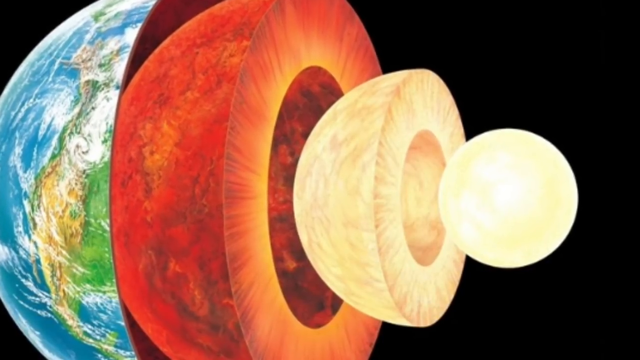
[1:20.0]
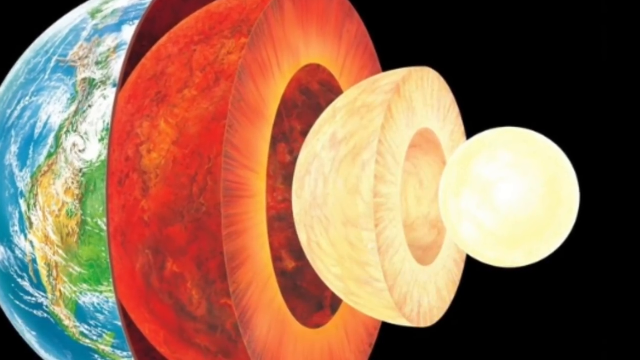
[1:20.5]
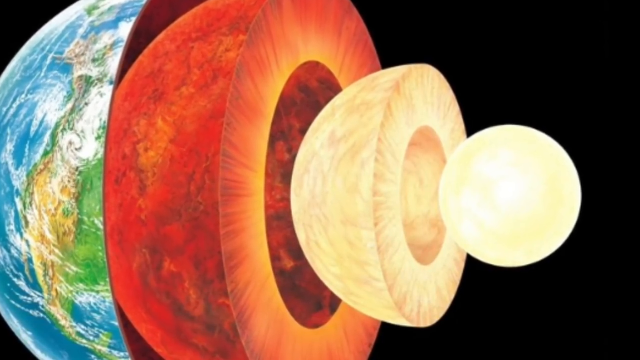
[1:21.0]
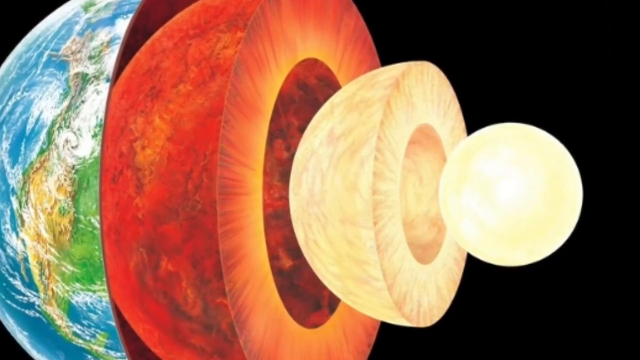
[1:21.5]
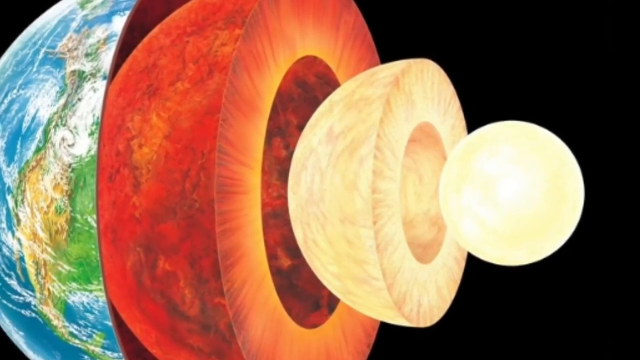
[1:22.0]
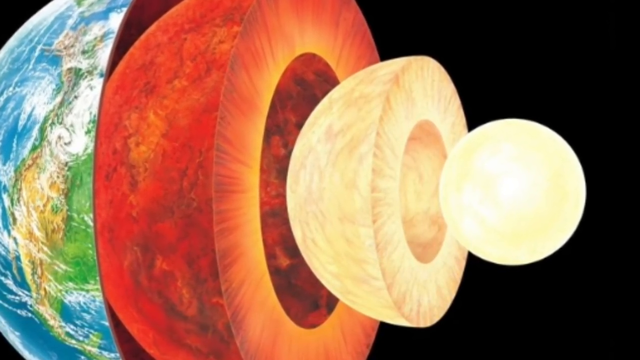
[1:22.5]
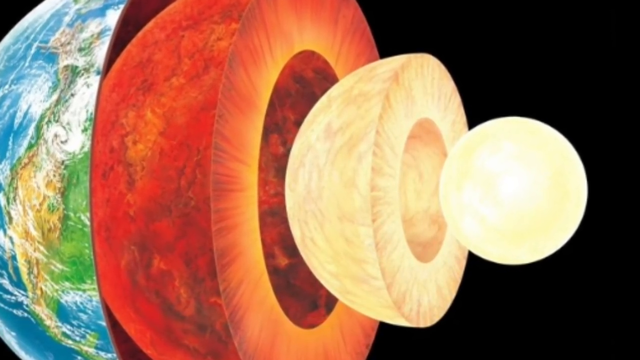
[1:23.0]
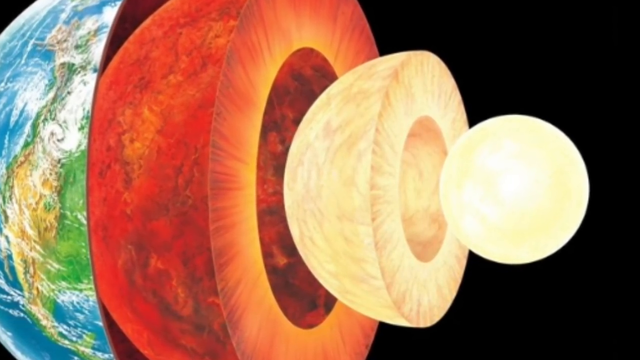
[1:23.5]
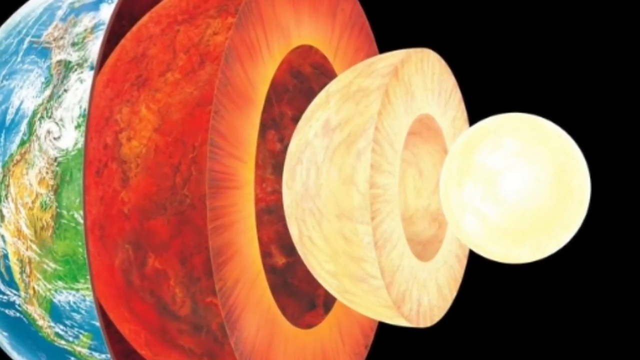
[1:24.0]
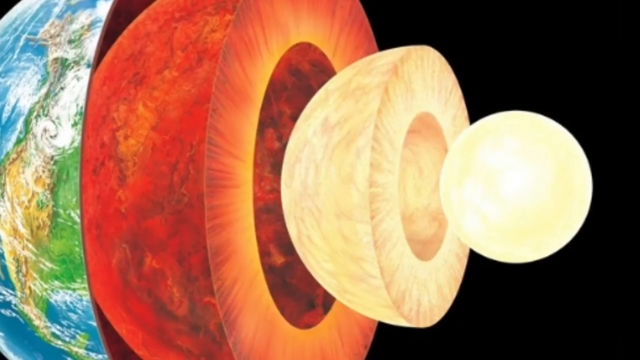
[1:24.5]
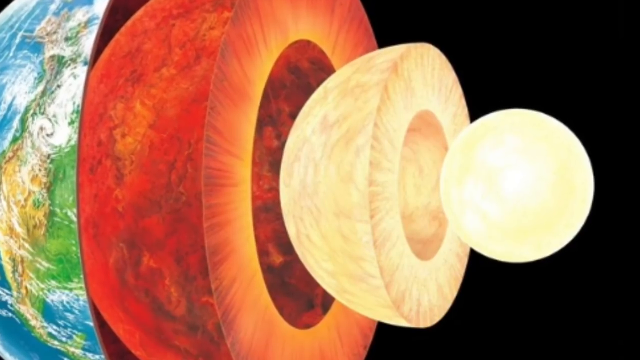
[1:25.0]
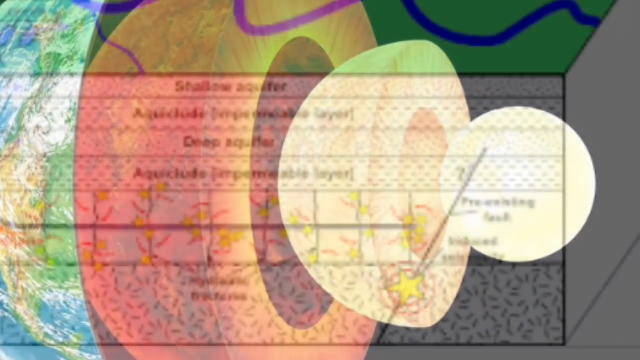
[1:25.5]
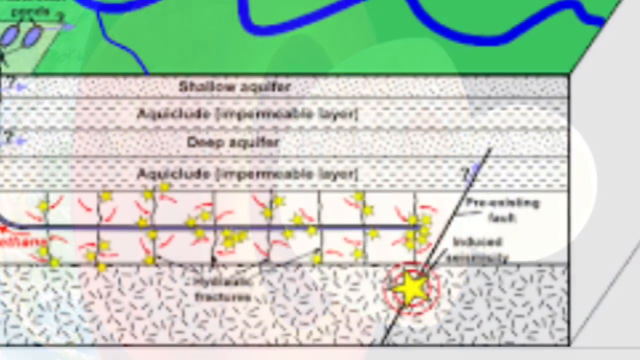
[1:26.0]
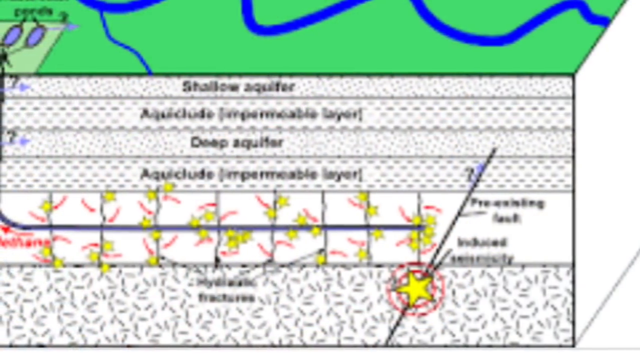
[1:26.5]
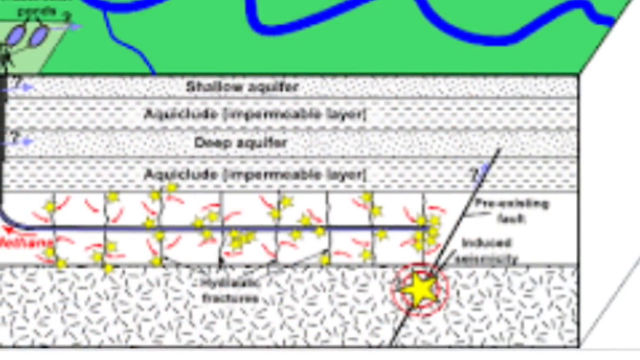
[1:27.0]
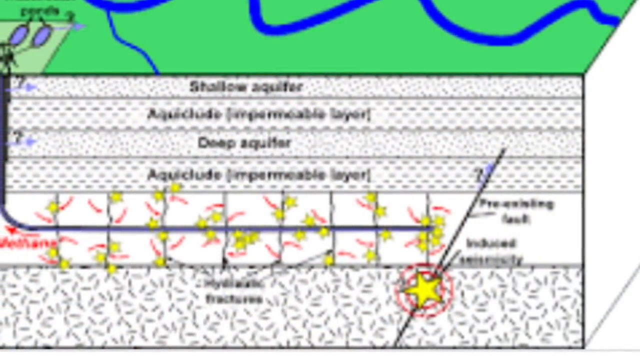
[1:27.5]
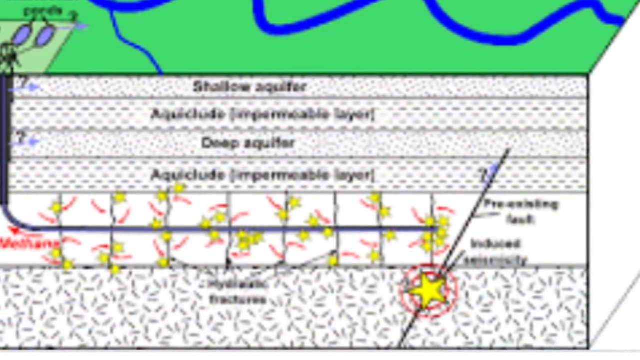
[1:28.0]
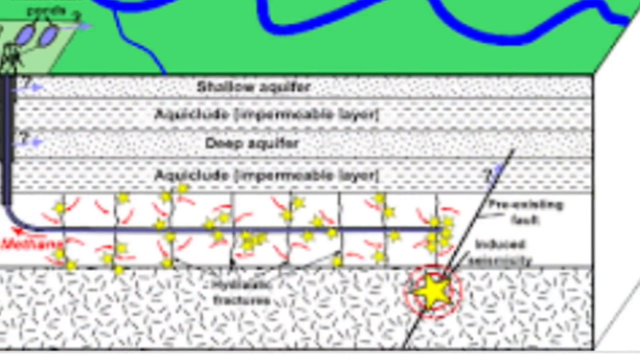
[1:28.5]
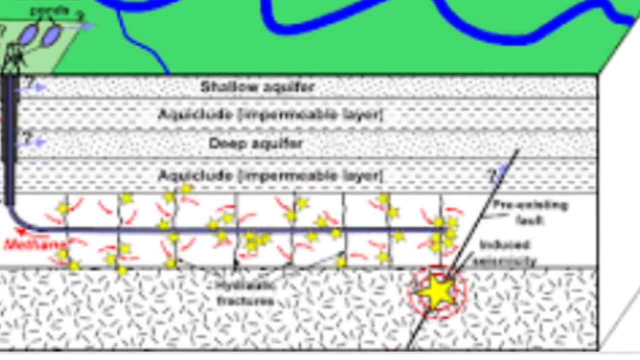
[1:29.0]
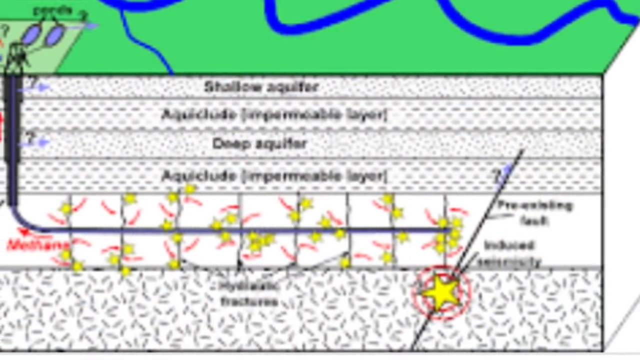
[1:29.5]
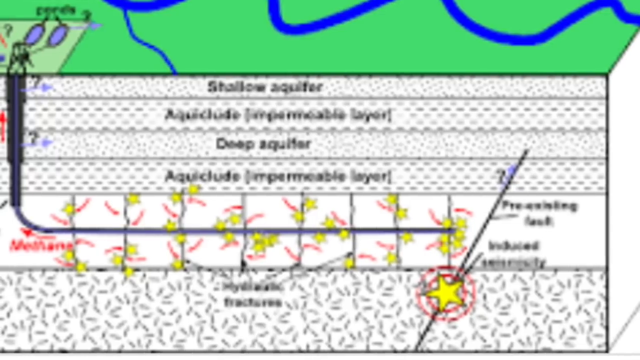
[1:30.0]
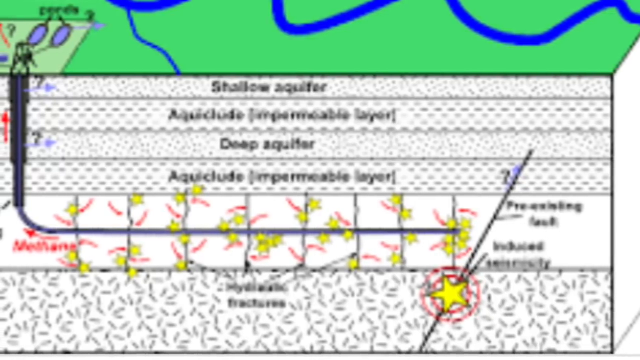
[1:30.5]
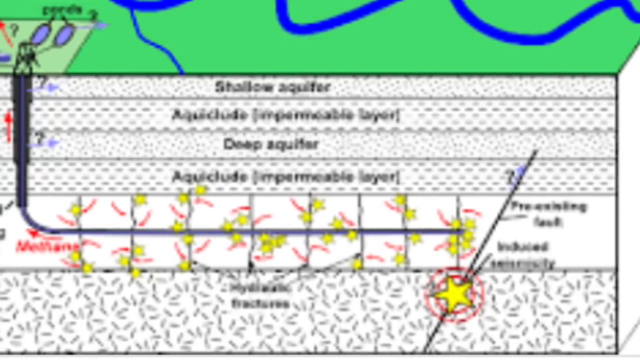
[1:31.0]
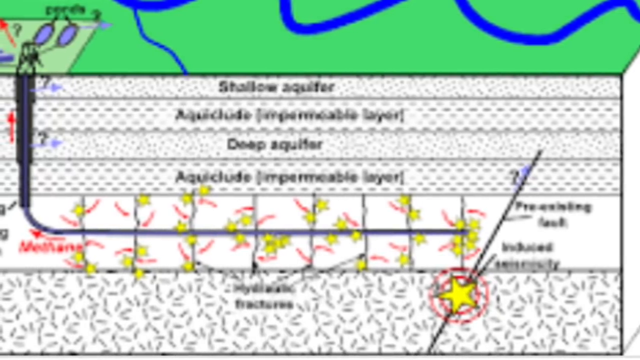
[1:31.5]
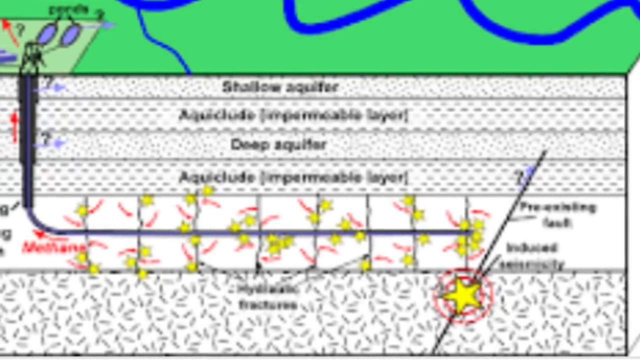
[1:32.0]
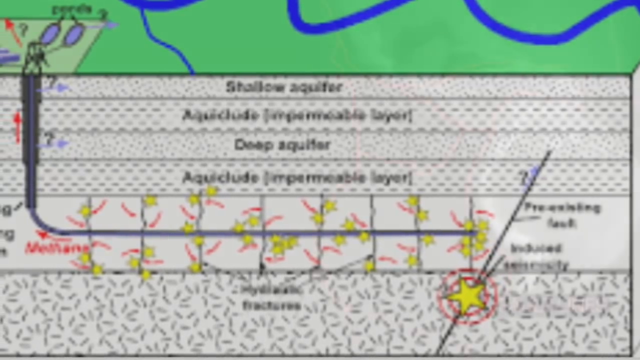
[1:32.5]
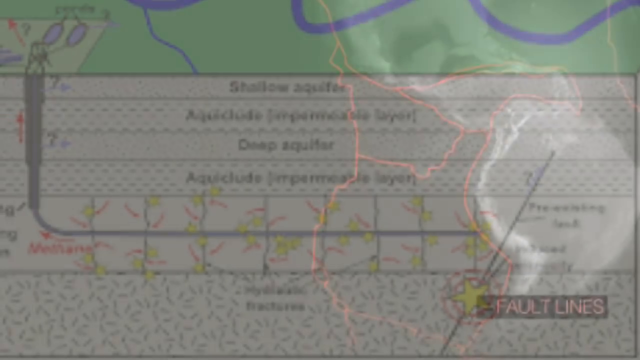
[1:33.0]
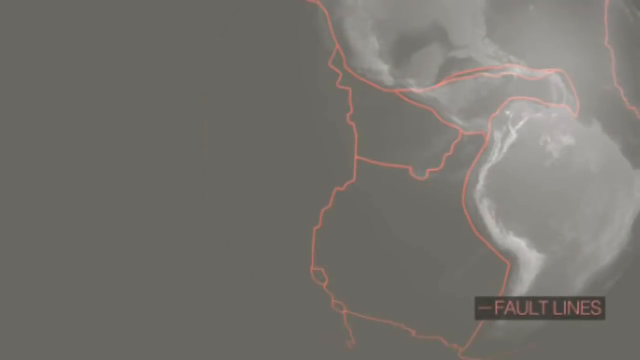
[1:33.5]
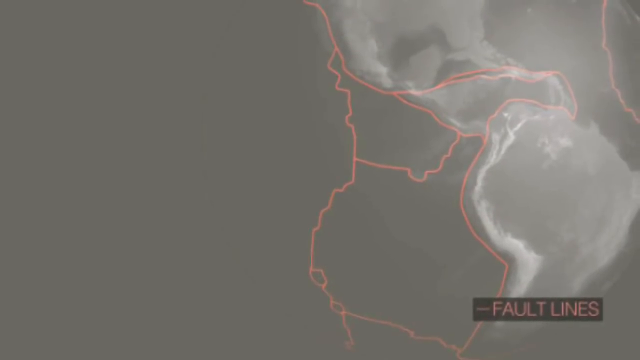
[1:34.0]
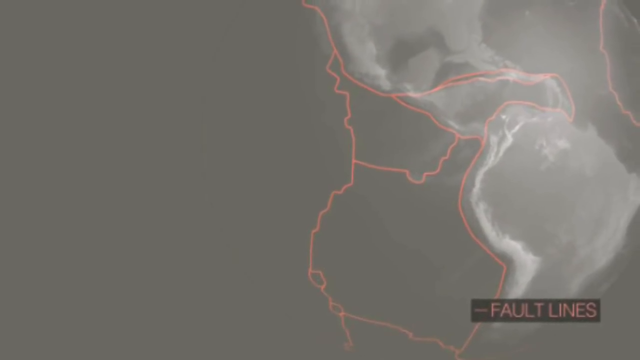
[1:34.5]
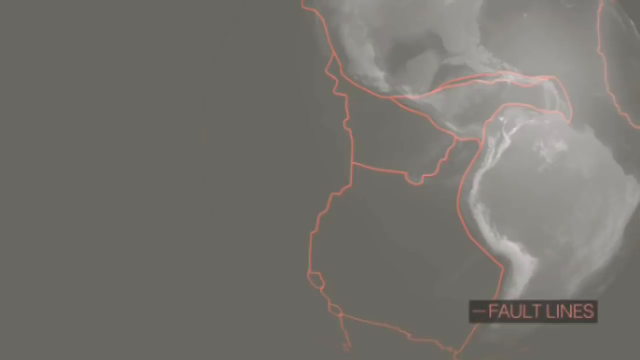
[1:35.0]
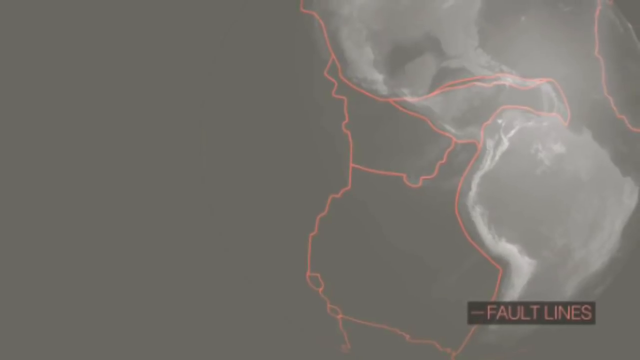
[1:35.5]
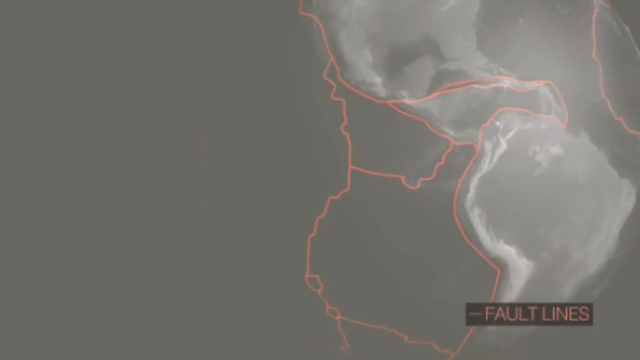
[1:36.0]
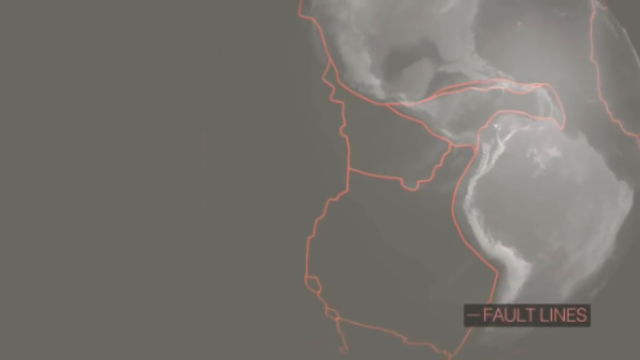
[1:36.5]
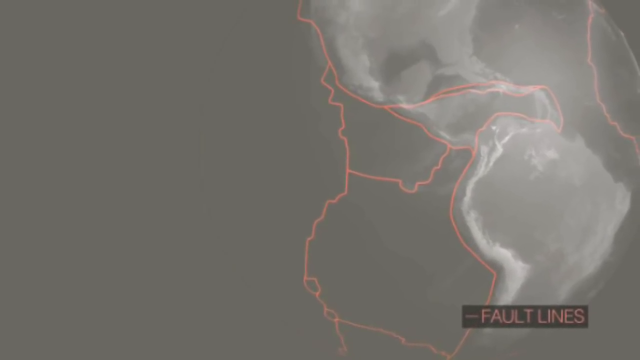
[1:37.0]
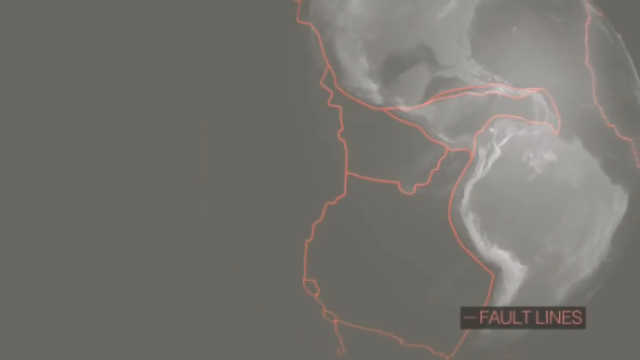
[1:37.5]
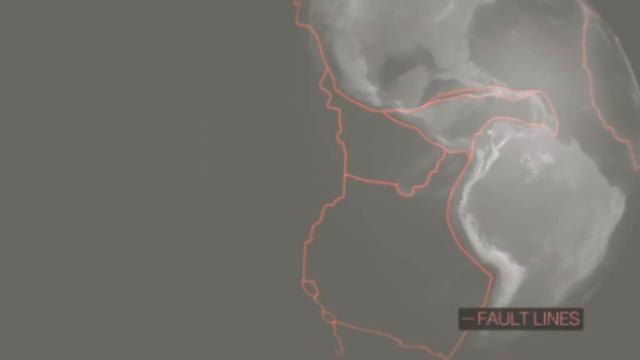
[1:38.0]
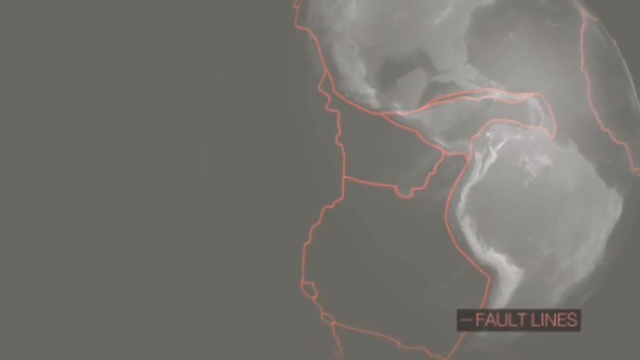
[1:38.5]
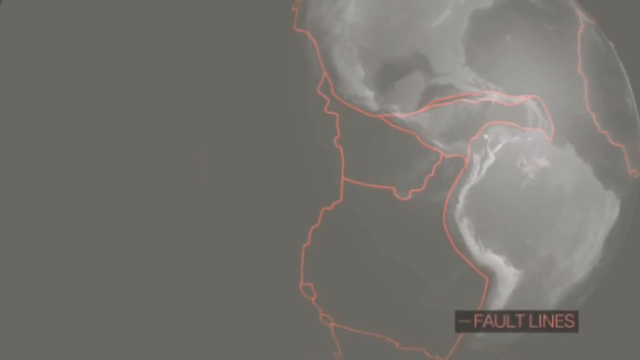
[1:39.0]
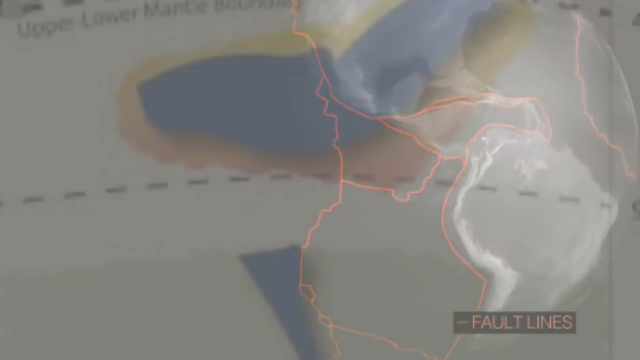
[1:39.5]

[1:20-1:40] On the right-hand side the Earth appears, and the view cuts into it to show the inside, with the mantle circling around in a big chunk and the core inside it. Inside the core is something that almost looks like a moon. The mantle is a very, very dark orange and the core has a luminous, glowing, moon-like glow, seen from an outer view. The view then flips to a graph showing layers, with green on top and a blue squiggly line on top. Labels read "shallow aquifer" and "deep aquifer"; some other labels are blurry and unreadable. A visual shows something going down through several layers, and then a picture appears with the text "the fault lines".